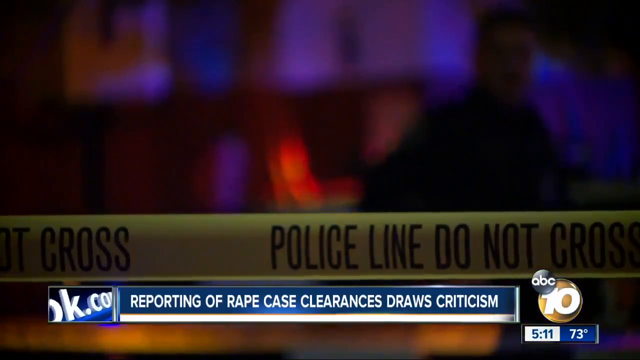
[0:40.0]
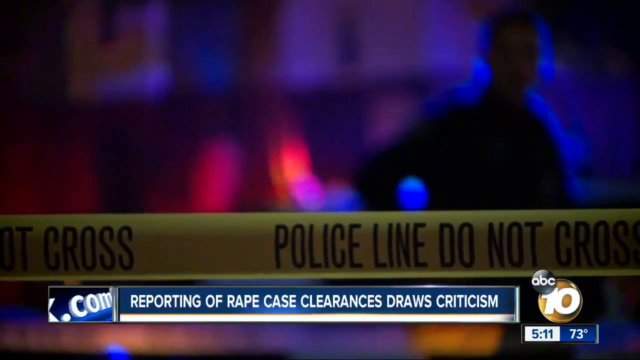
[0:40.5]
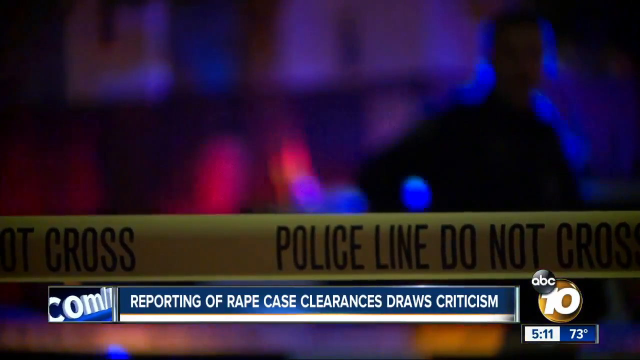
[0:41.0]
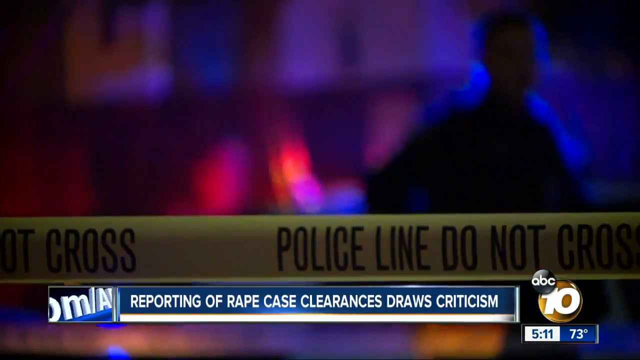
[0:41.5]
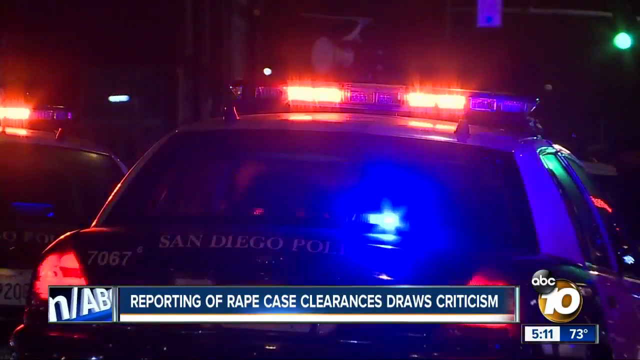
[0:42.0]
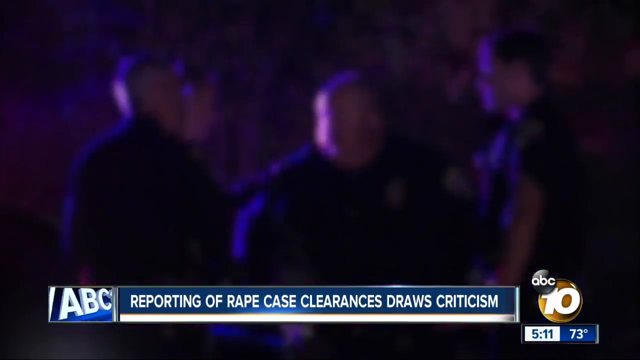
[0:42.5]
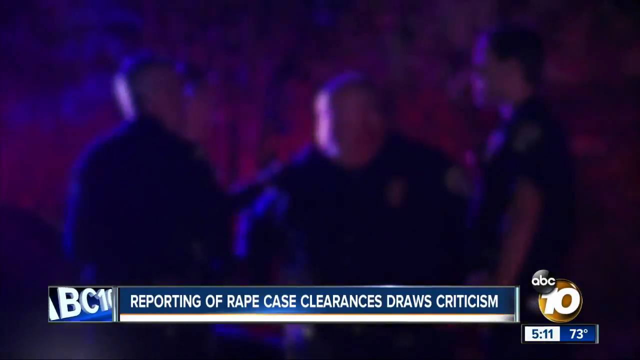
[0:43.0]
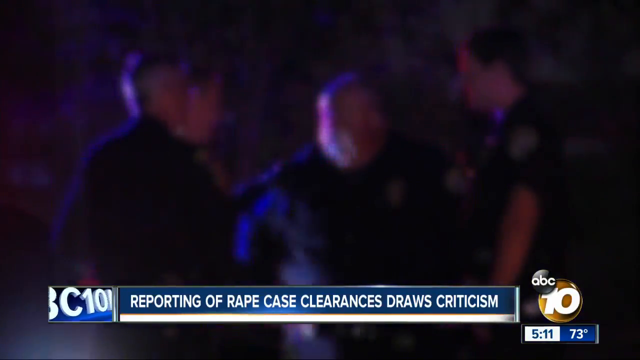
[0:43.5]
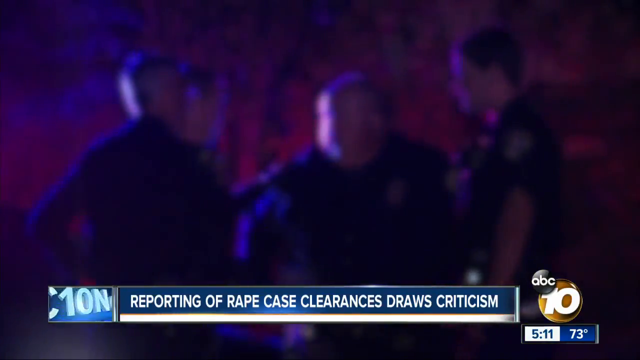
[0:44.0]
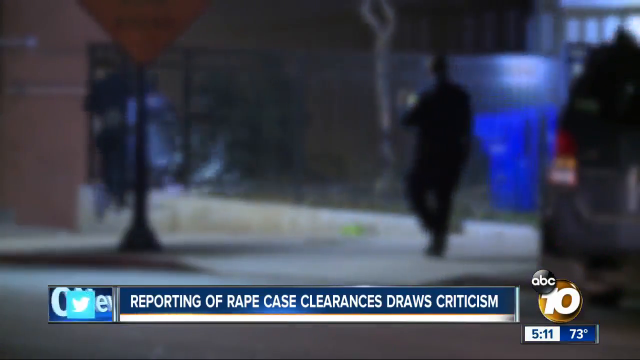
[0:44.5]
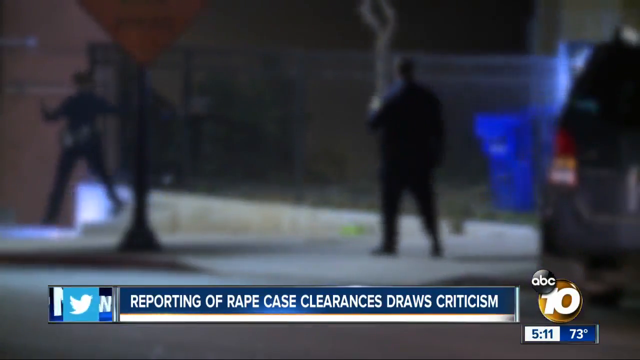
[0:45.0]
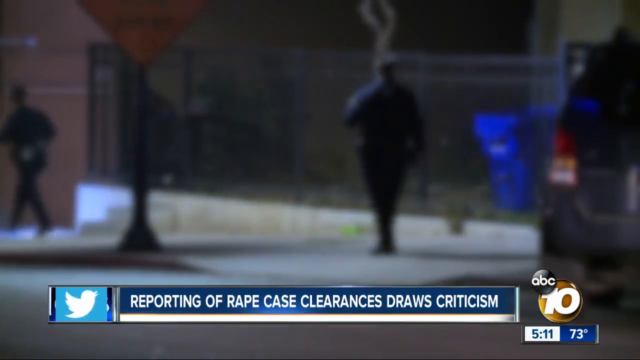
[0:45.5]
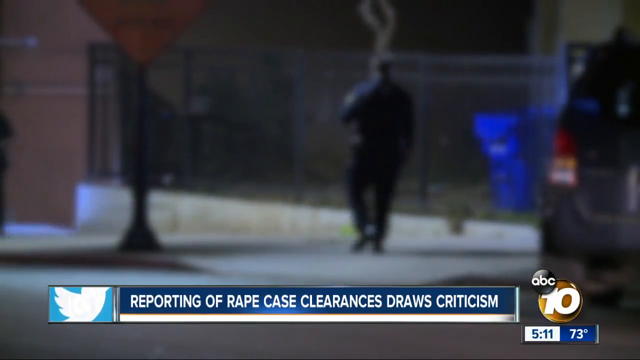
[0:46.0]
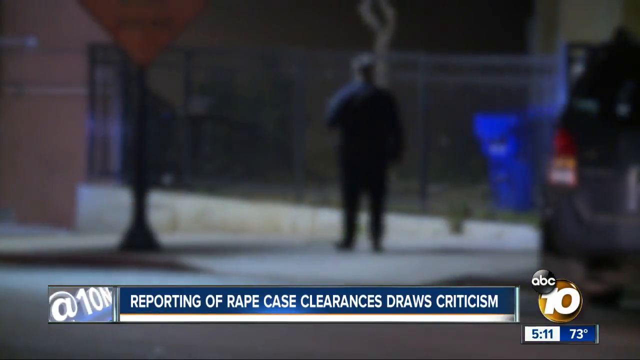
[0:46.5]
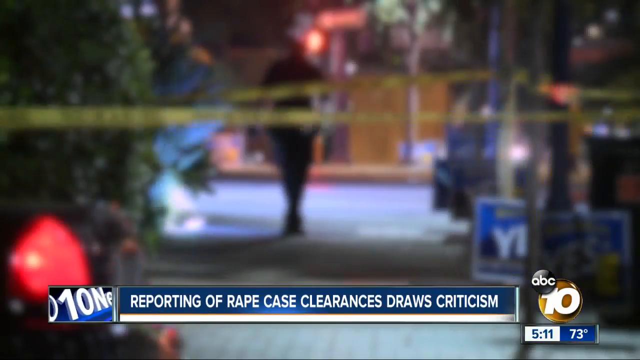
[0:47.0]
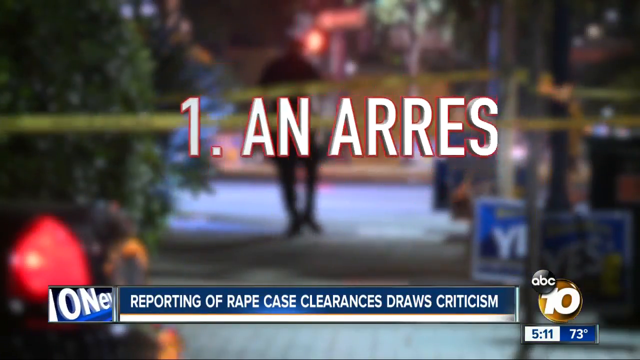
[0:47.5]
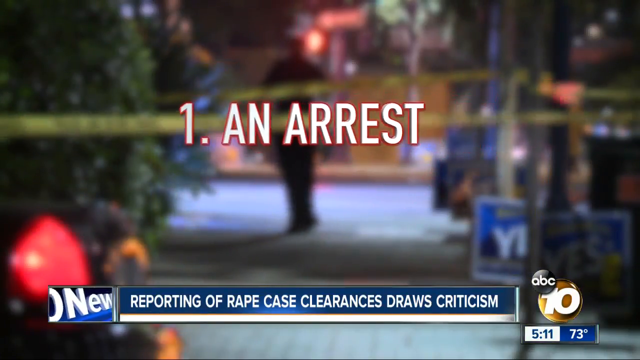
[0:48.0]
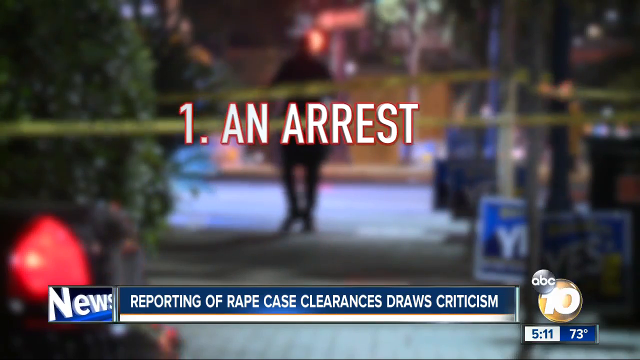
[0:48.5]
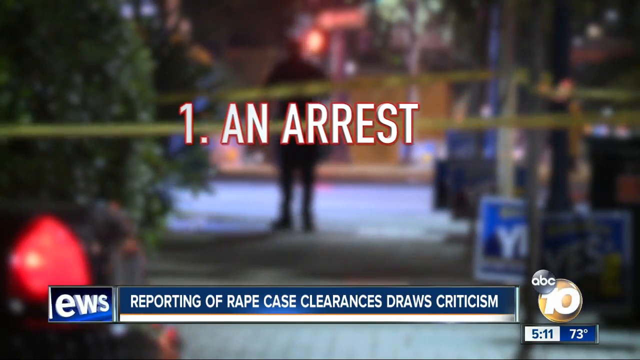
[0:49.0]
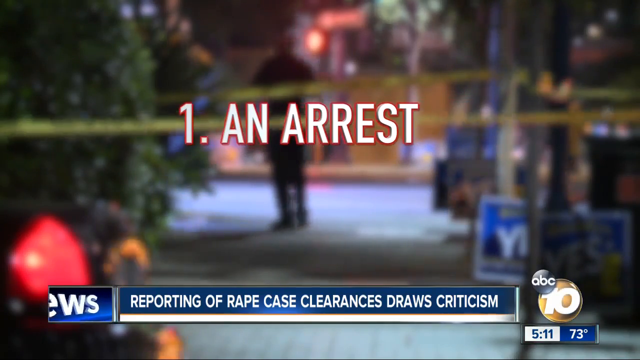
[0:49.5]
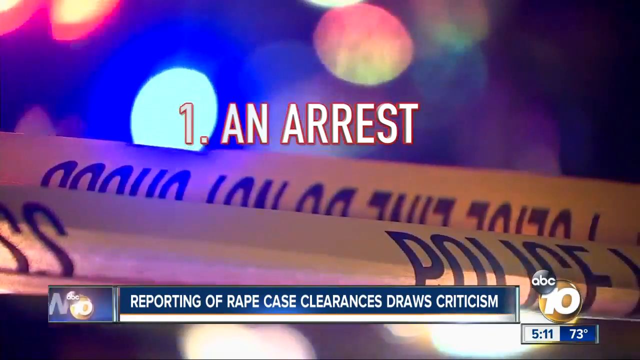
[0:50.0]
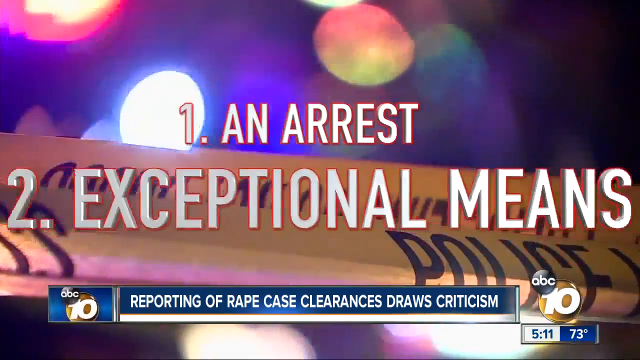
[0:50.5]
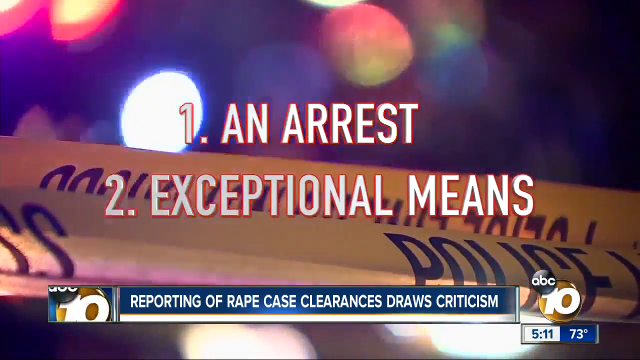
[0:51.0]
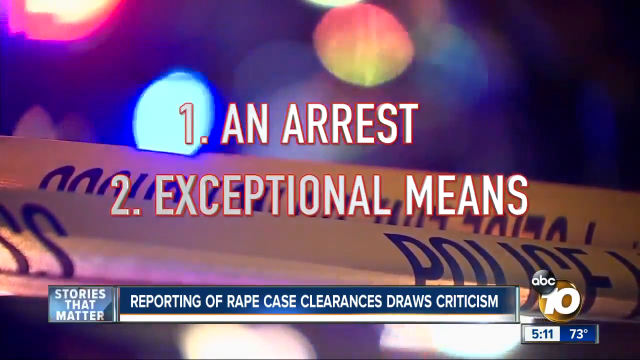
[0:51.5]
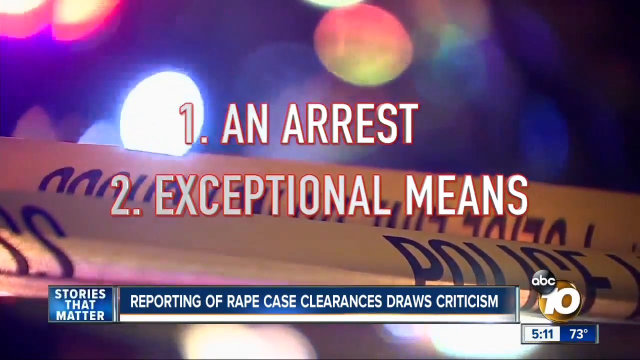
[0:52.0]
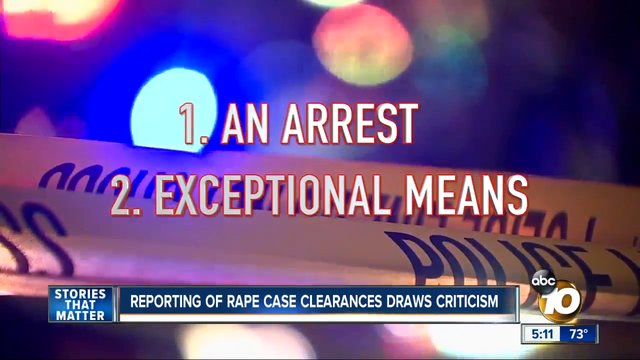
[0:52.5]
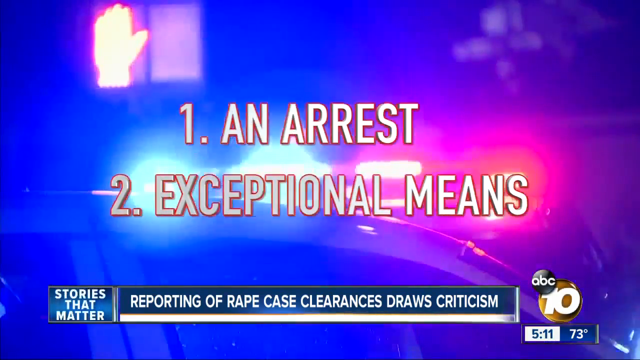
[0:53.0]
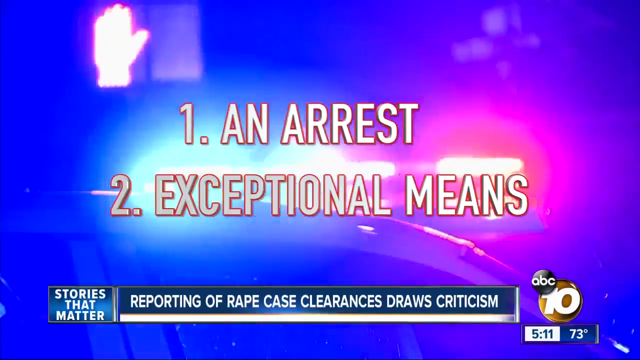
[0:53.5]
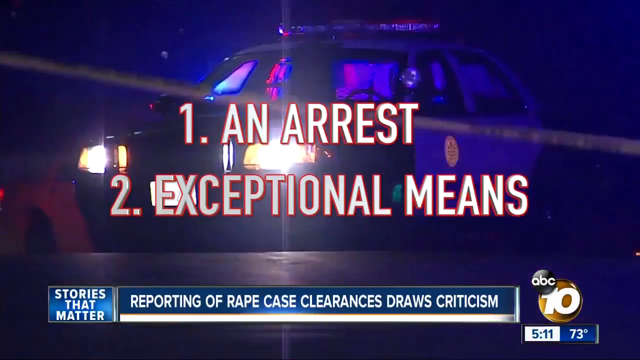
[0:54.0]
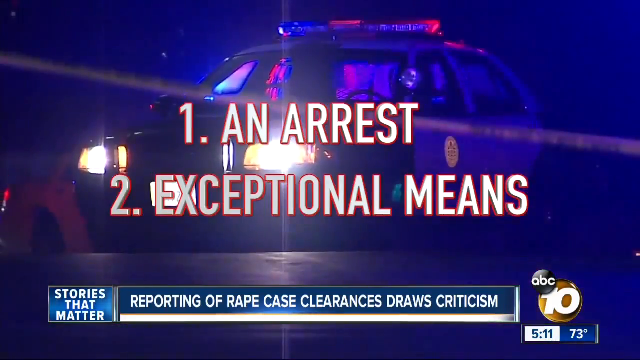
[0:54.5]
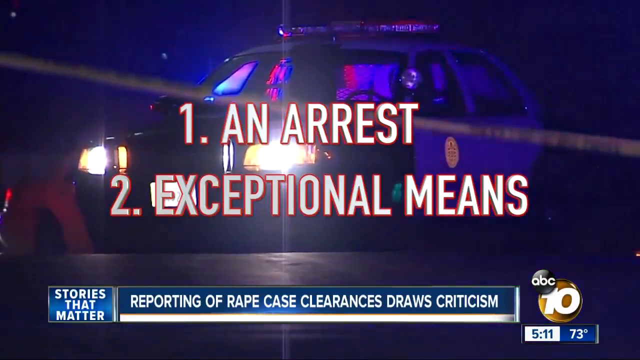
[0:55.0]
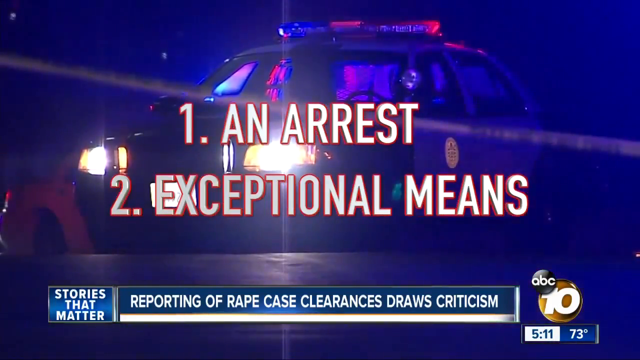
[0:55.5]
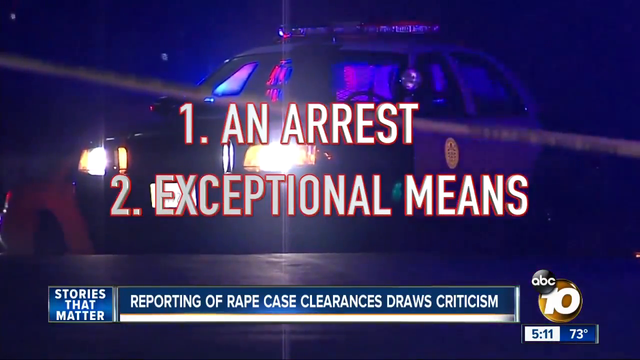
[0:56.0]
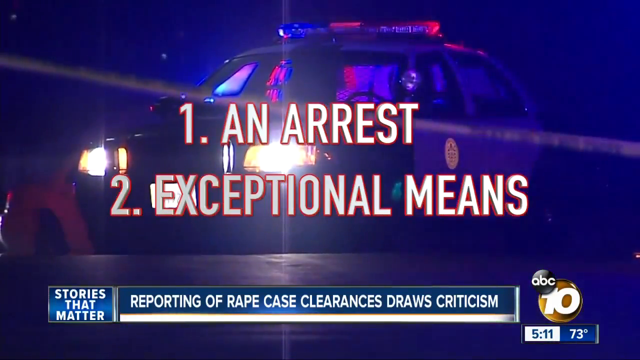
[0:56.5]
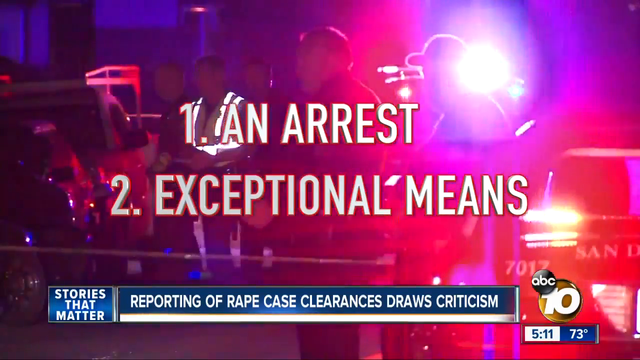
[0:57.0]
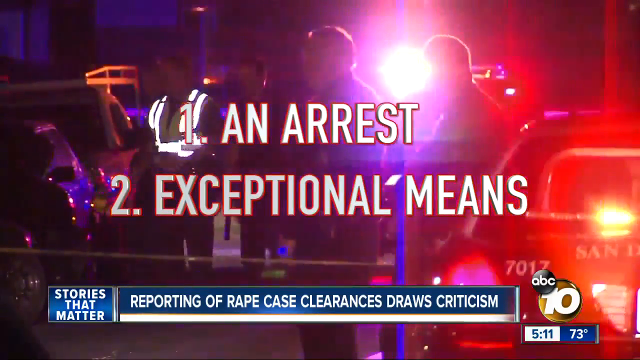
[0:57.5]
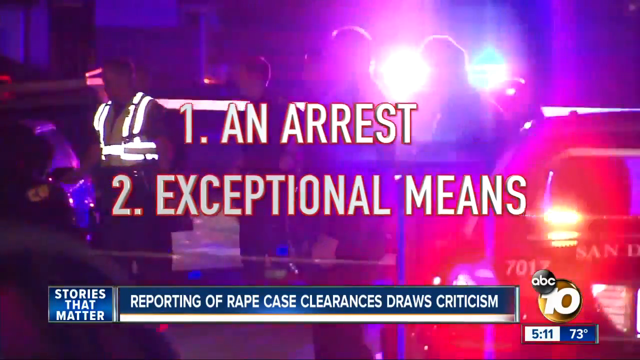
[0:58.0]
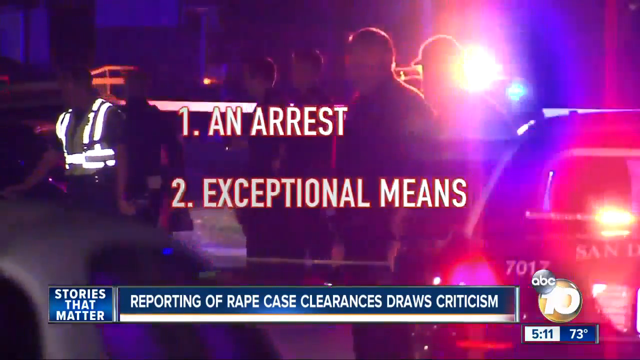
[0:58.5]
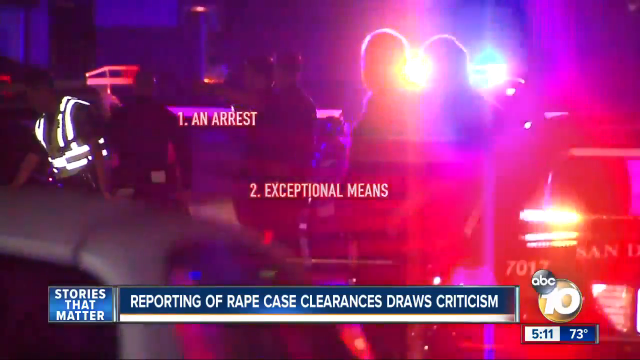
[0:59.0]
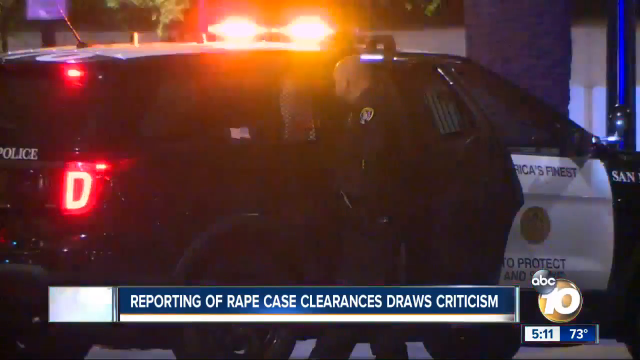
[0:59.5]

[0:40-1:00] Jennifer continues reporting from the ground about how police clear and arrest in rape cases.